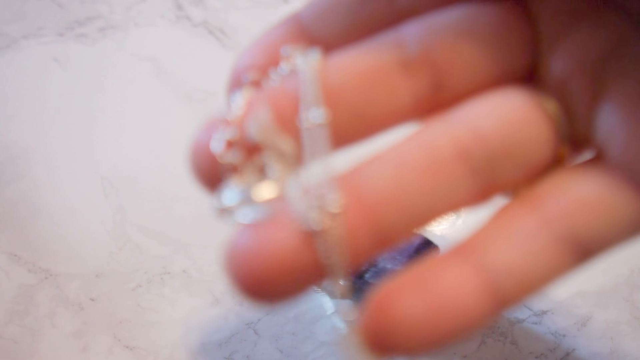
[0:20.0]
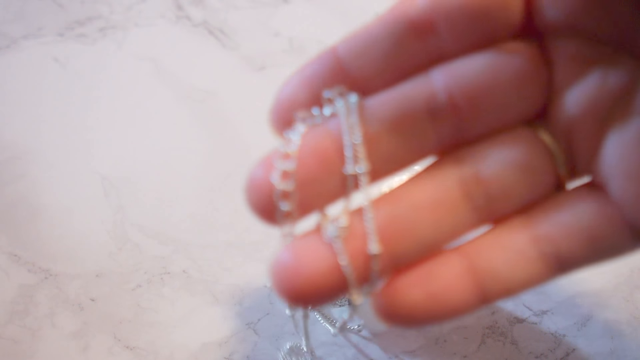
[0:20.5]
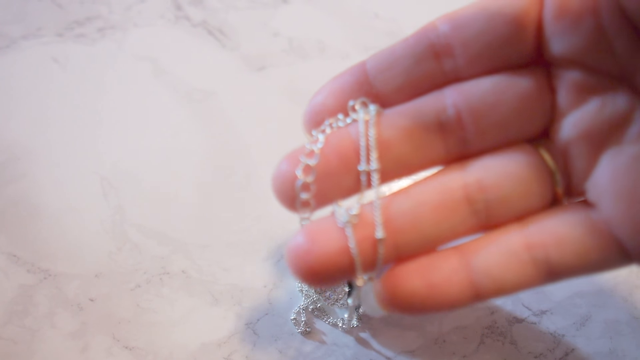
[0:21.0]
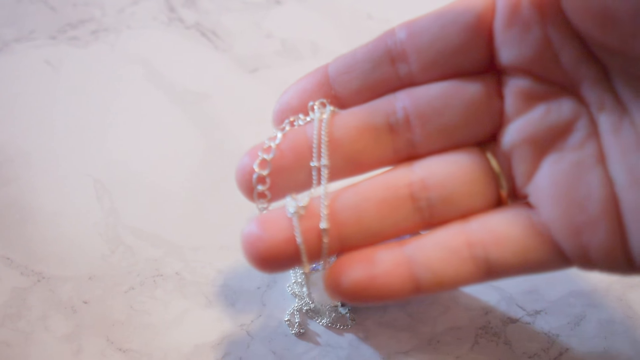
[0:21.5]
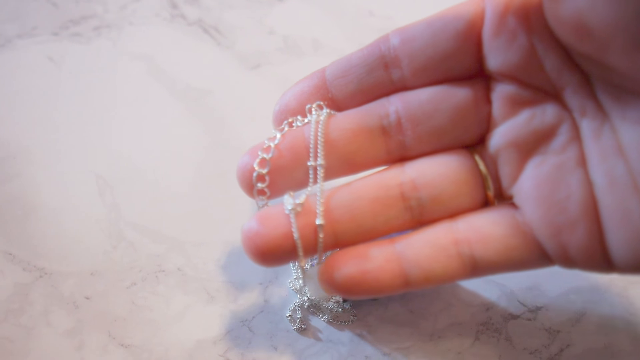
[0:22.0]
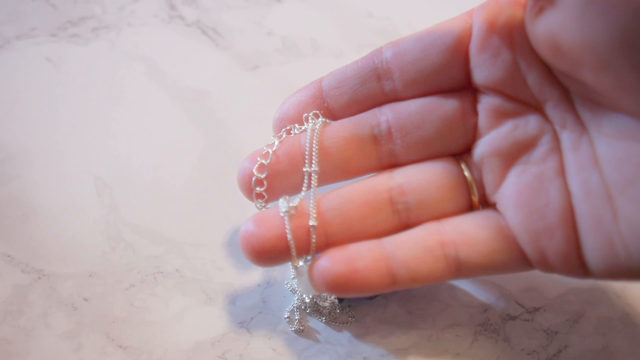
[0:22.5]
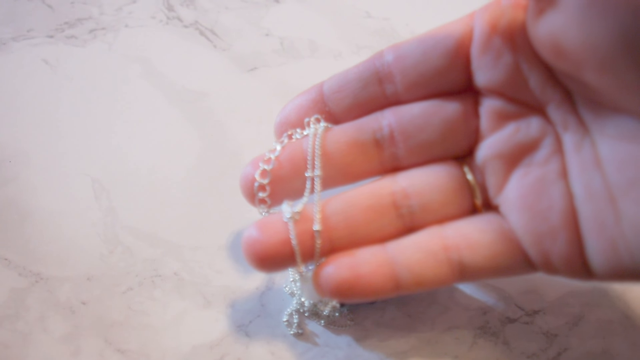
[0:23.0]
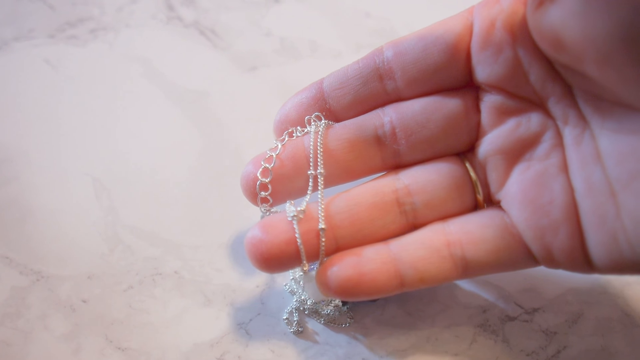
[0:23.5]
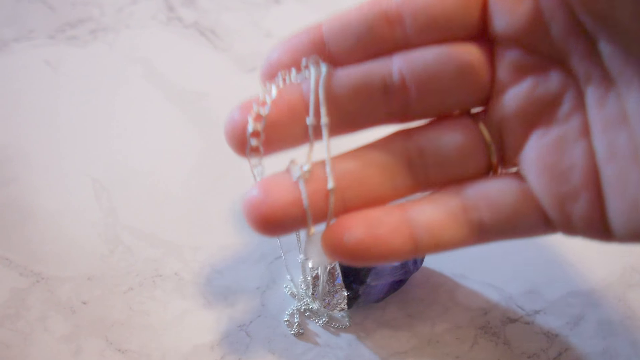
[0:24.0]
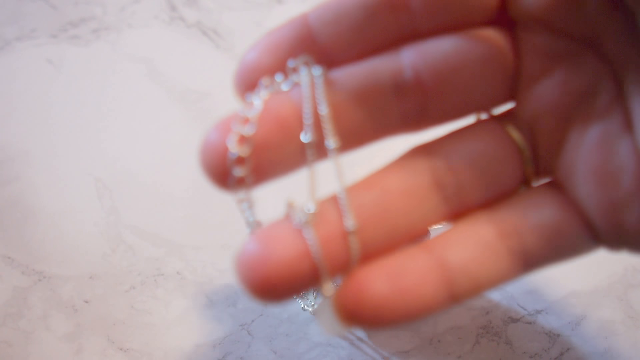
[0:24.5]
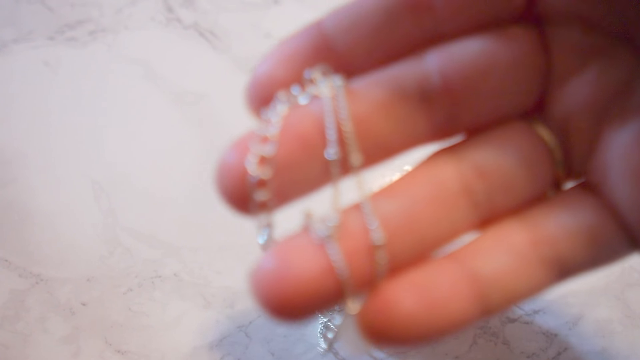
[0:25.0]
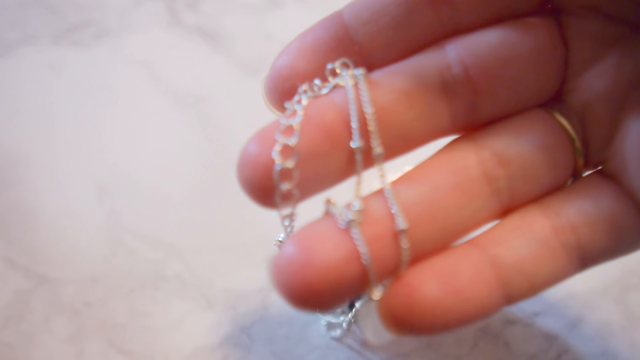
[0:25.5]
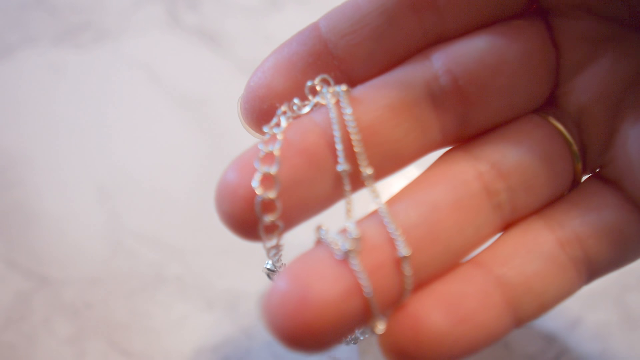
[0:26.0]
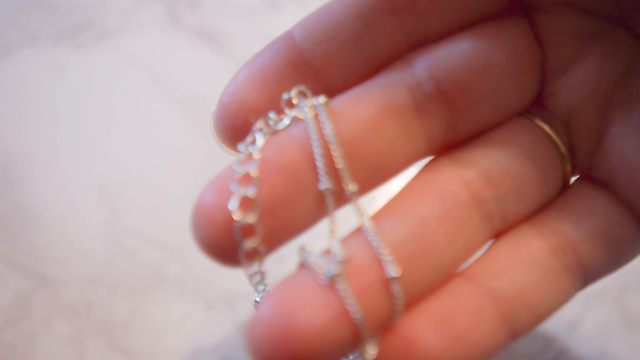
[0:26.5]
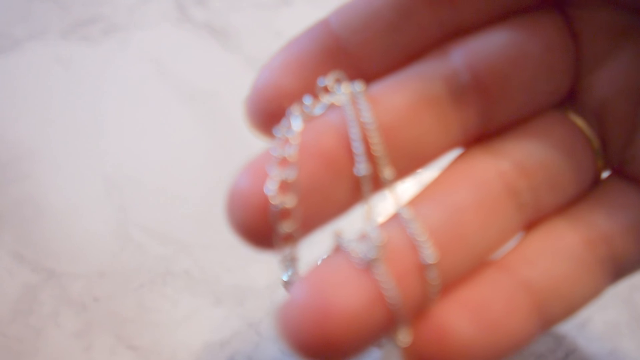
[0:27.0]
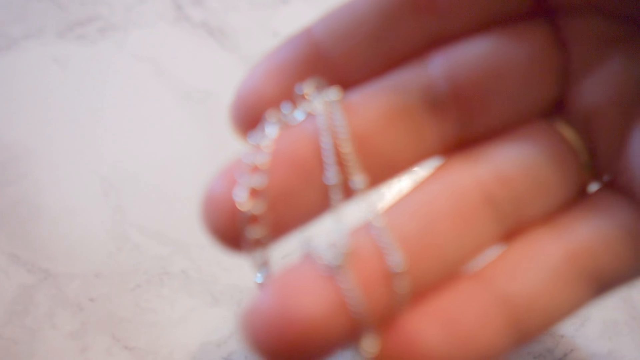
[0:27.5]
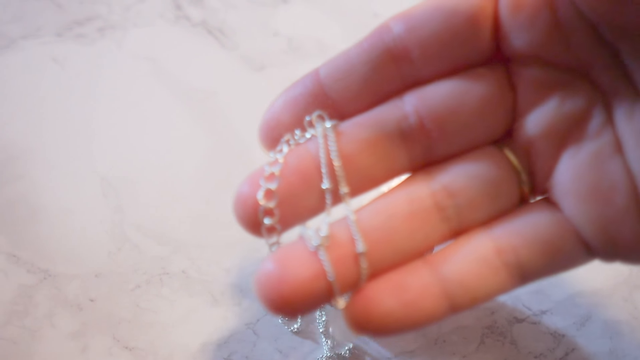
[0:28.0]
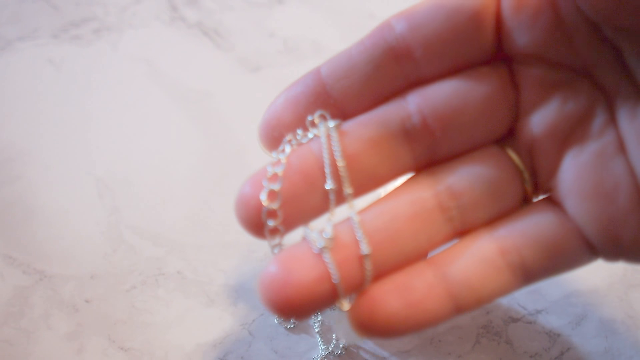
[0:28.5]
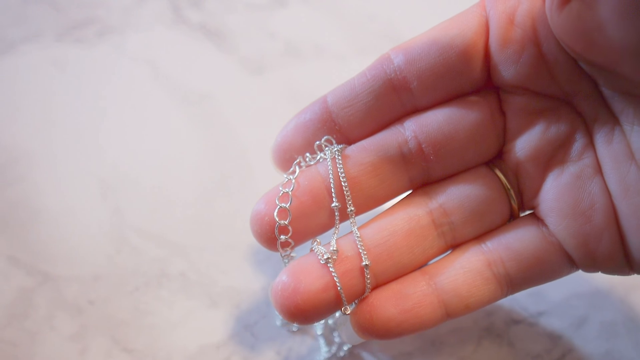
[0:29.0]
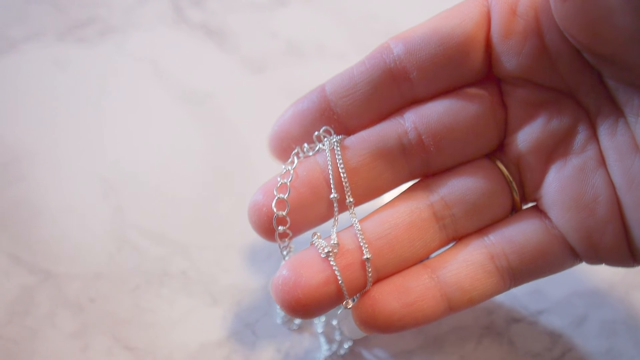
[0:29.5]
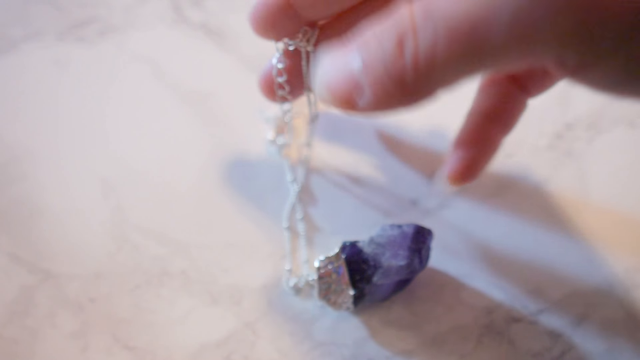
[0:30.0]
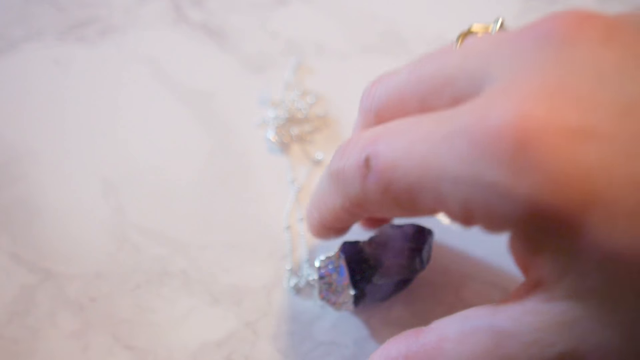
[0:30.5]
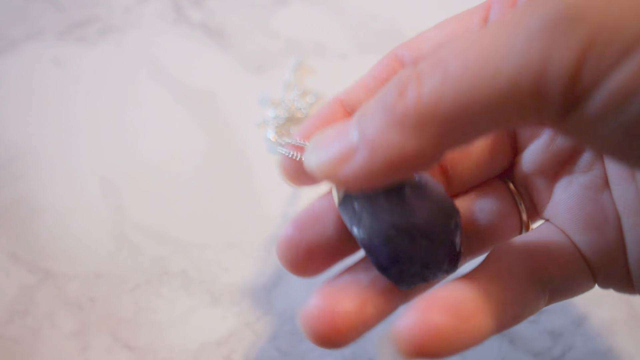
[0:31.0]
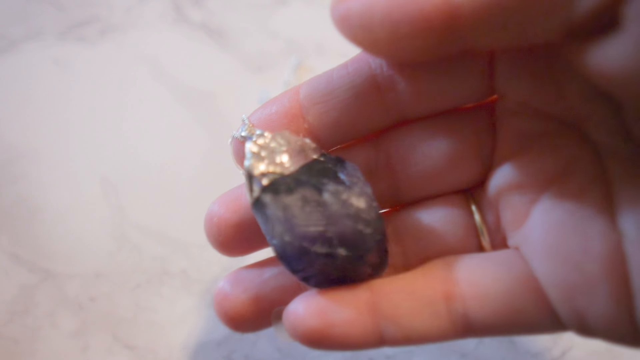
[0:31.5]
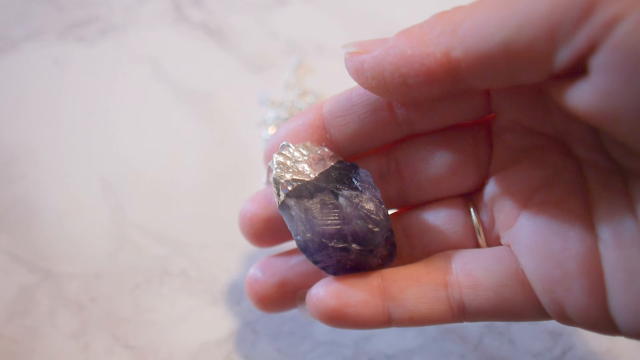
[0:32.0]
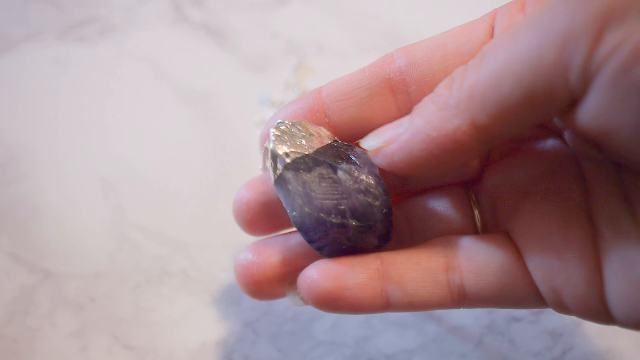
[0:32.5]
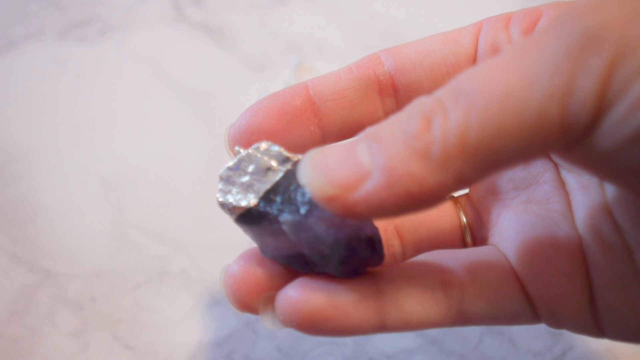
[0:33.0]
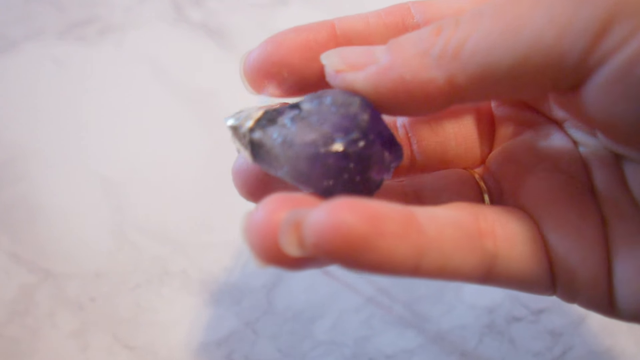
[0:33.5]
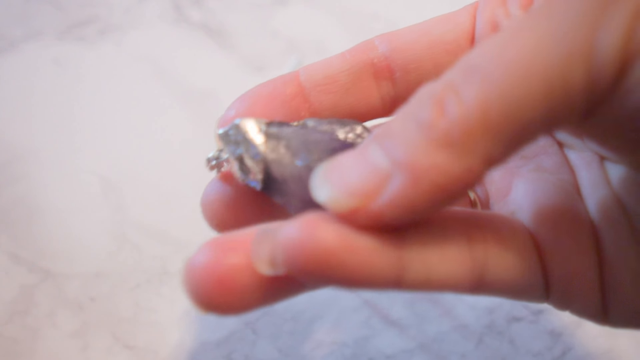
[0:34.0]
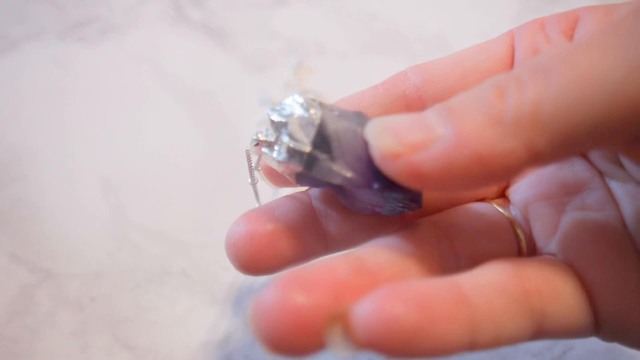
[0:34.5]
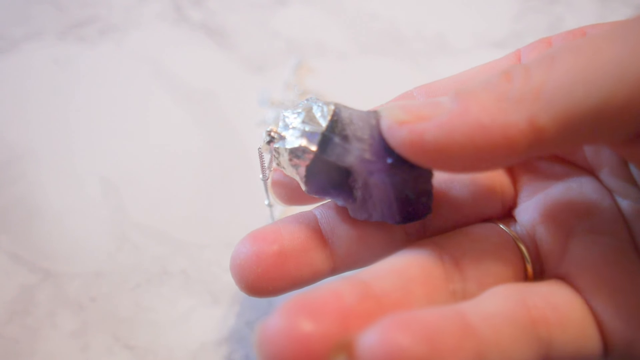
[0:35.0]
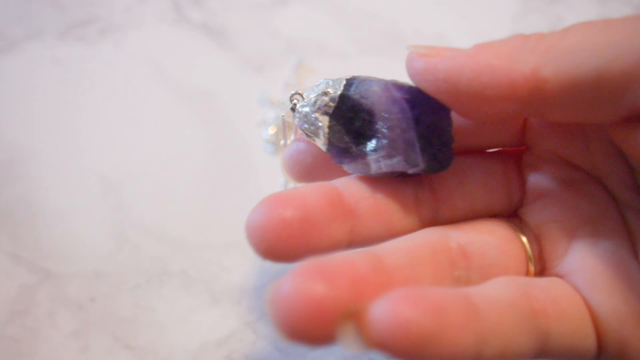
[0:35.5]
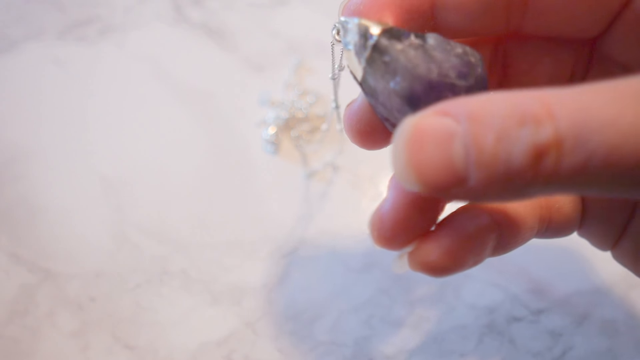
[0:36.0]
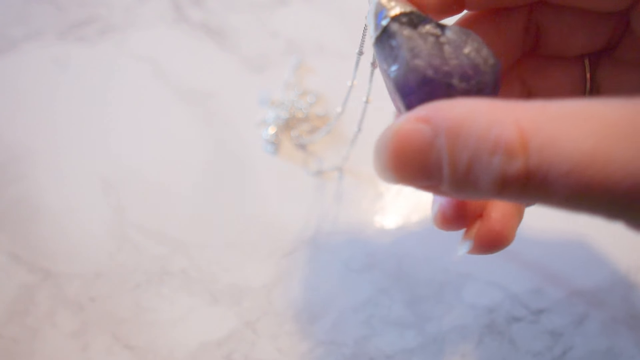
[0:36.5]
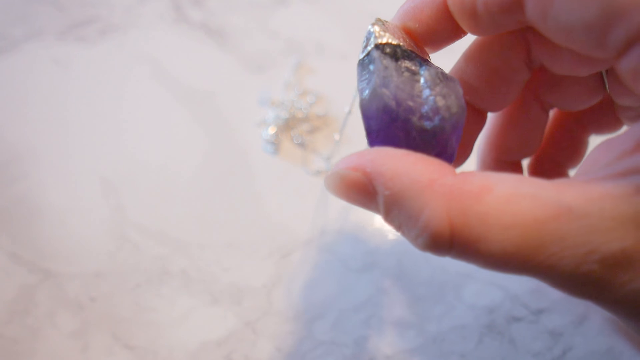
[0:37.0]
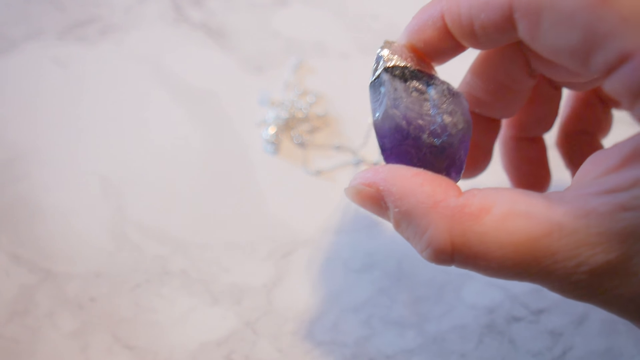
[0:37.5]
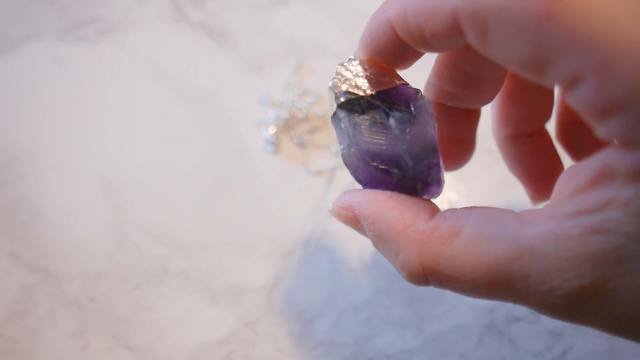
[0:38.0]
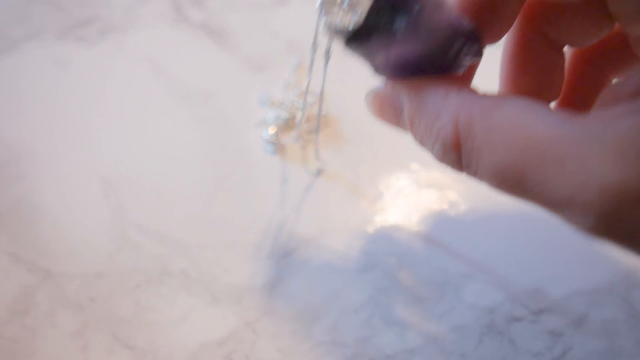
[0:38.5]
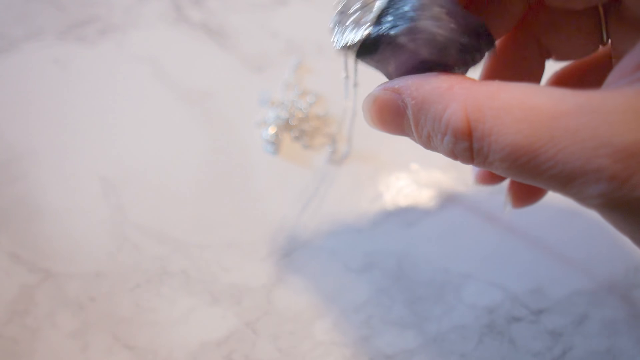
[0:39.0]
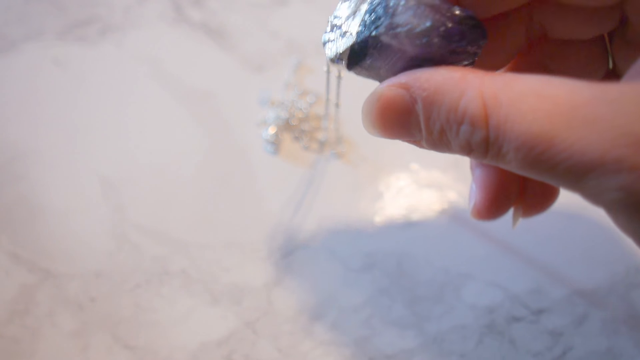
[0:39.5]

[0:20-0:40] The video stays focused on the necklace. A person has picked it up and observes it at close range, holding it against the camera. The reflection of the necklace is visible on his hand. He turns it around, and the camera shows every detail on every corner of the necklace, which is made from a very precious stone. The hands twist the necklace around to show its finer details. The necklace is then shown on the hands and fingers as the man observes the chain closely, and the camera focuses on the chain as well.